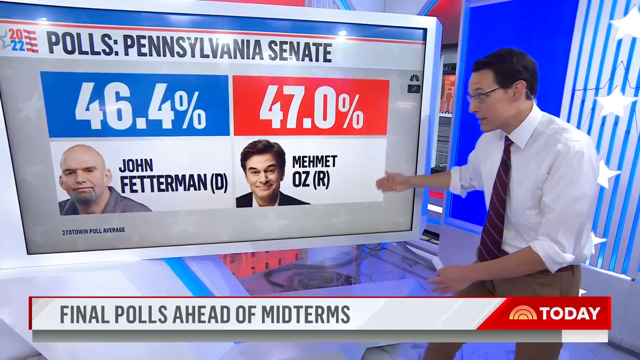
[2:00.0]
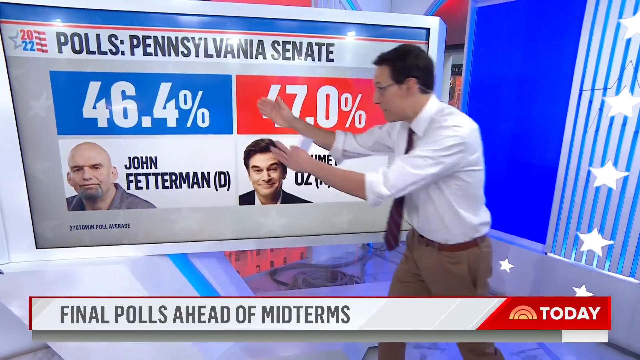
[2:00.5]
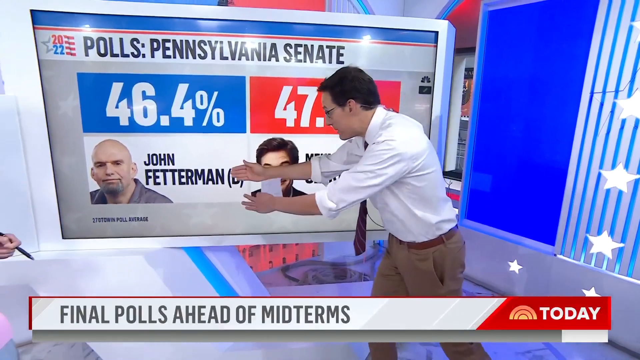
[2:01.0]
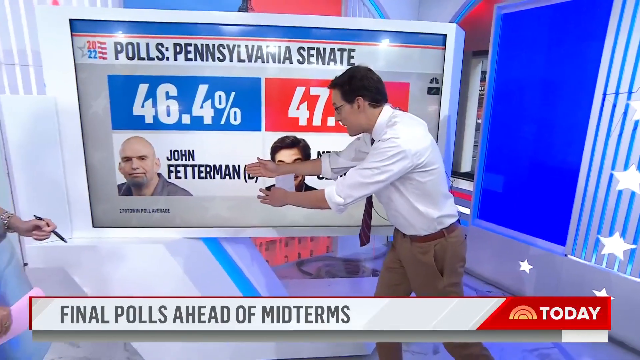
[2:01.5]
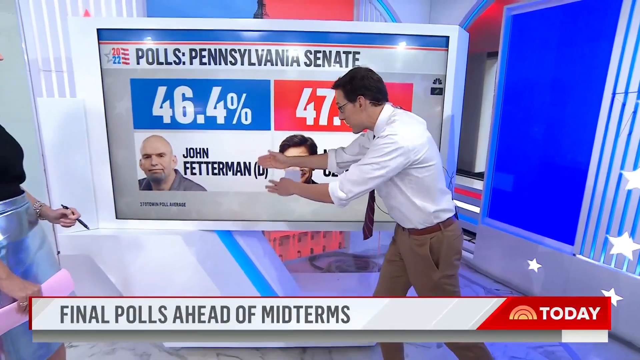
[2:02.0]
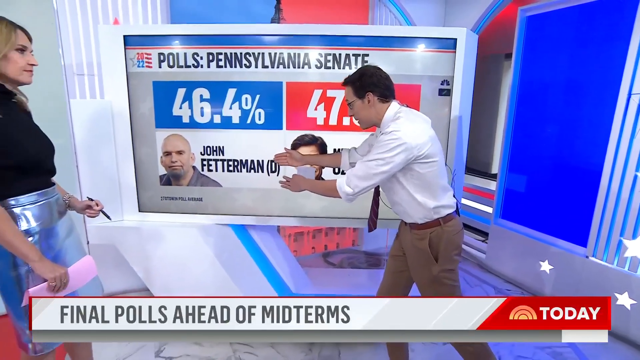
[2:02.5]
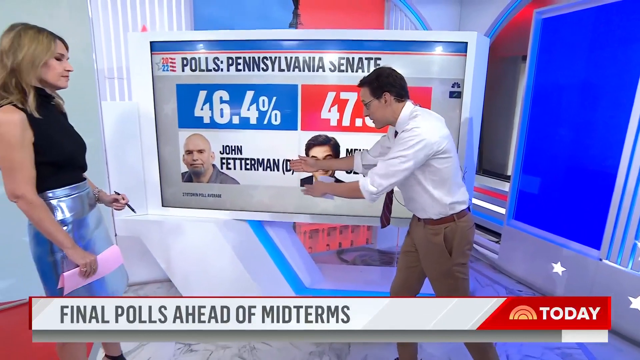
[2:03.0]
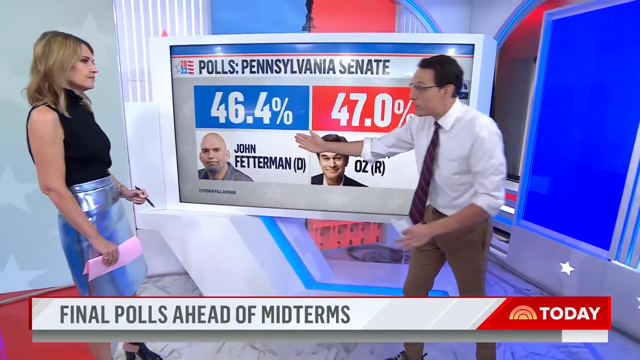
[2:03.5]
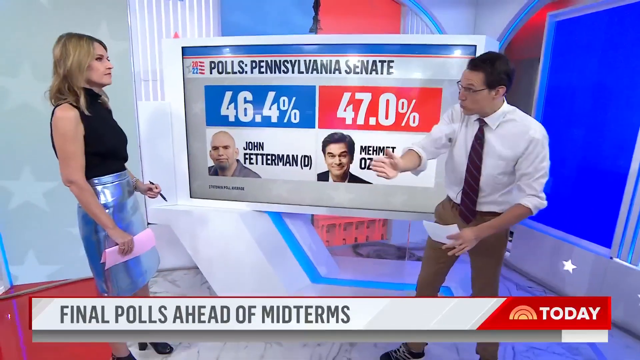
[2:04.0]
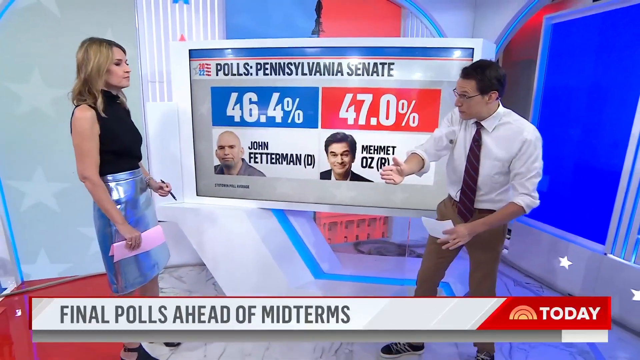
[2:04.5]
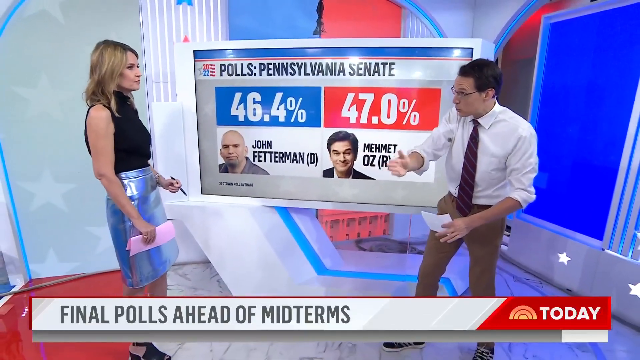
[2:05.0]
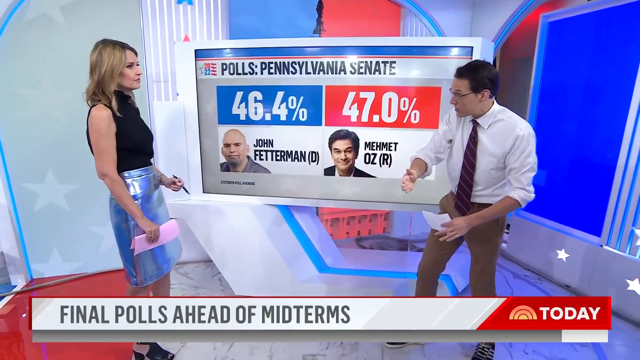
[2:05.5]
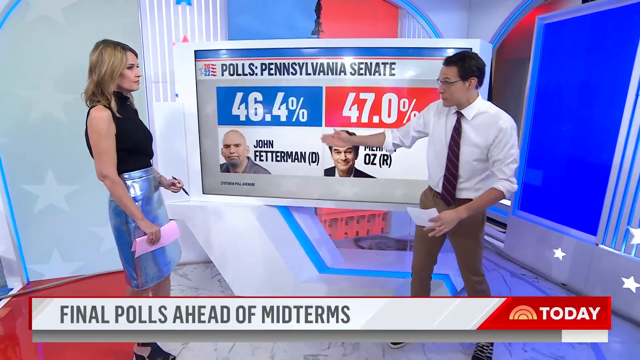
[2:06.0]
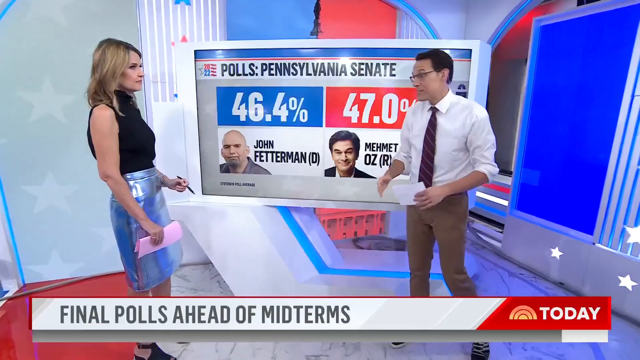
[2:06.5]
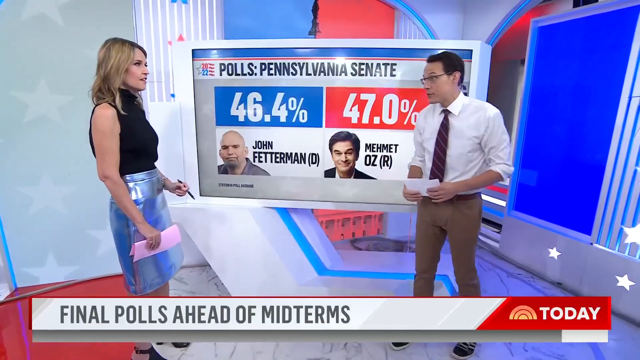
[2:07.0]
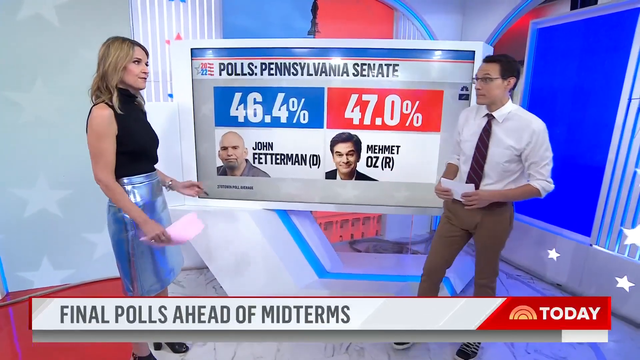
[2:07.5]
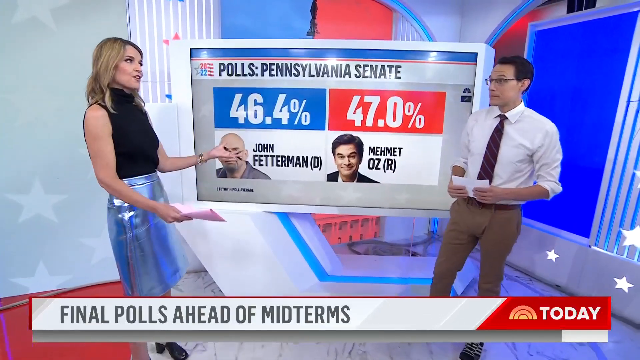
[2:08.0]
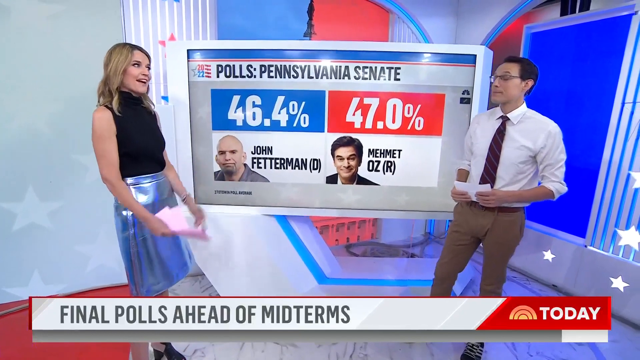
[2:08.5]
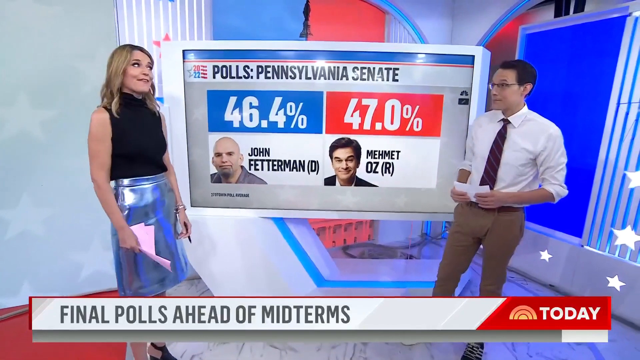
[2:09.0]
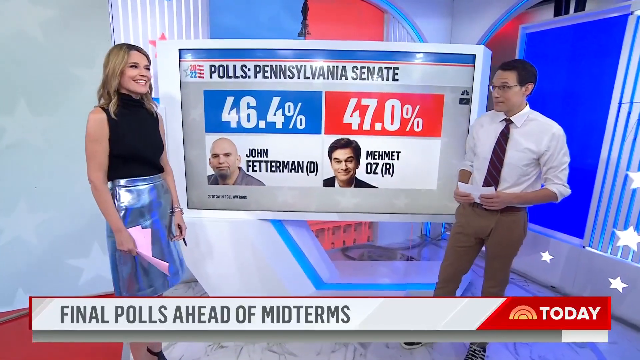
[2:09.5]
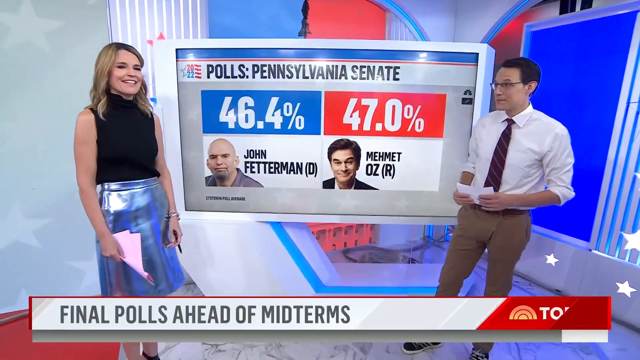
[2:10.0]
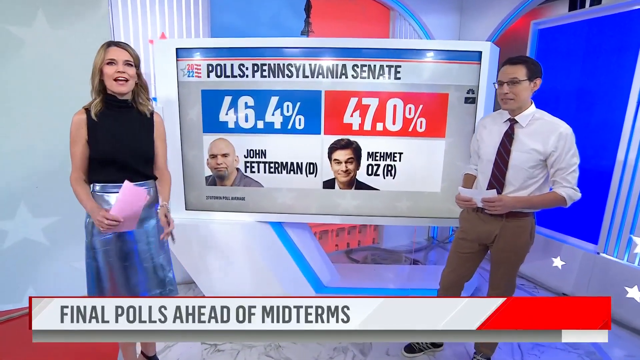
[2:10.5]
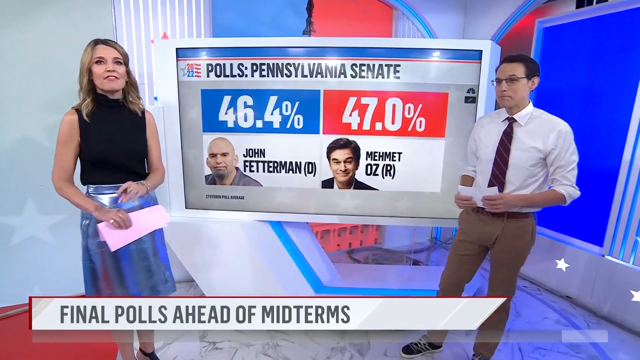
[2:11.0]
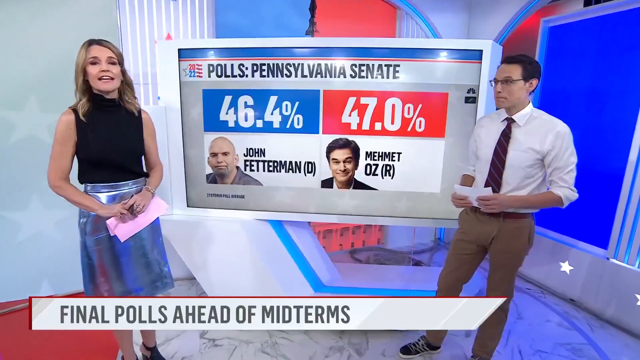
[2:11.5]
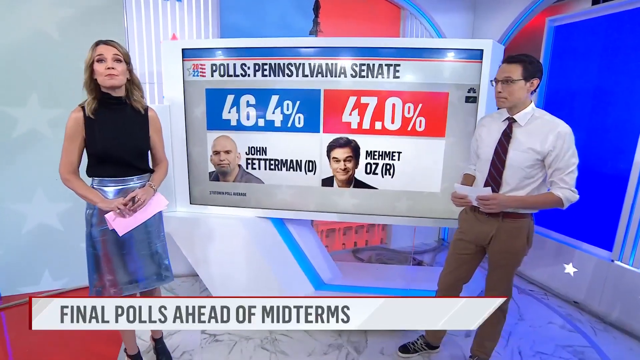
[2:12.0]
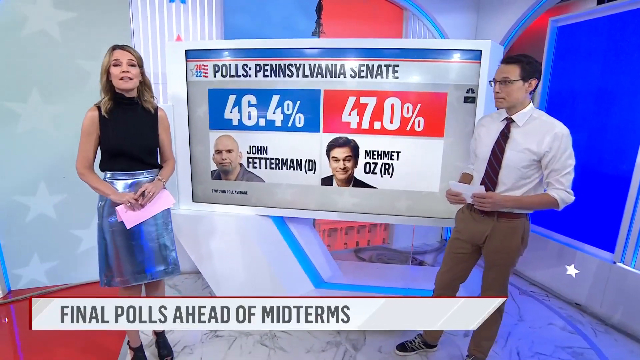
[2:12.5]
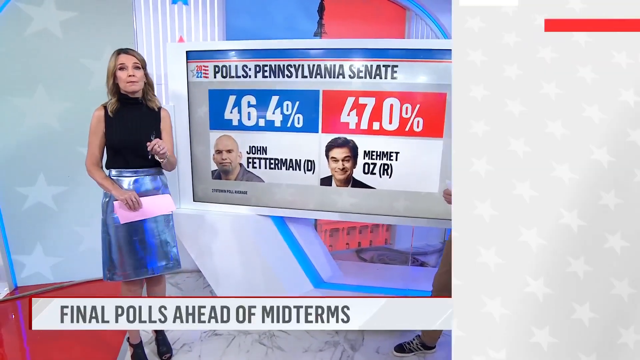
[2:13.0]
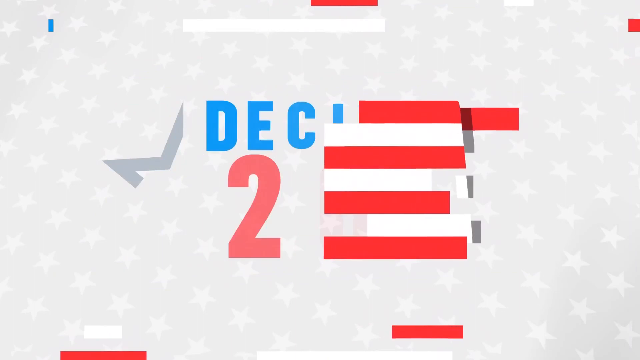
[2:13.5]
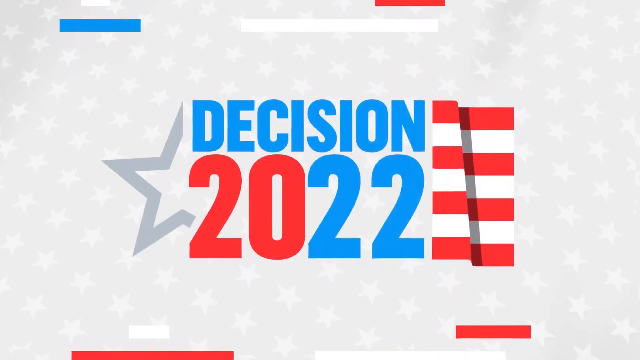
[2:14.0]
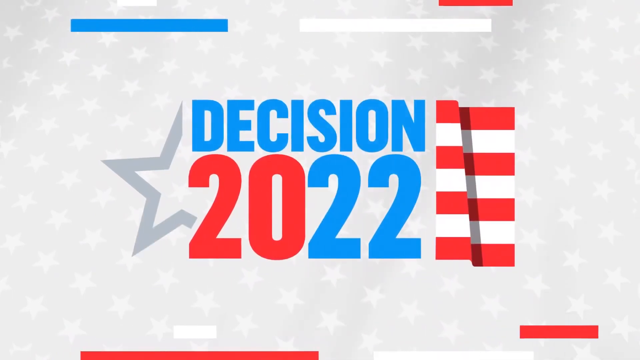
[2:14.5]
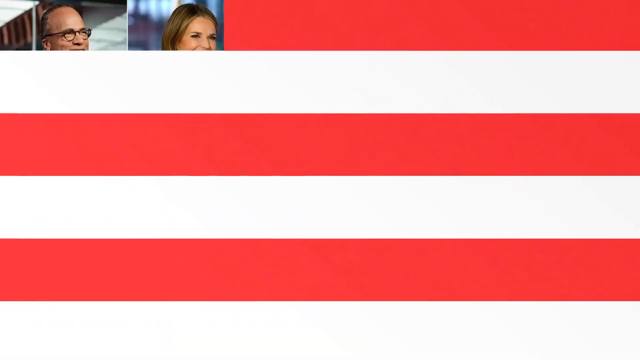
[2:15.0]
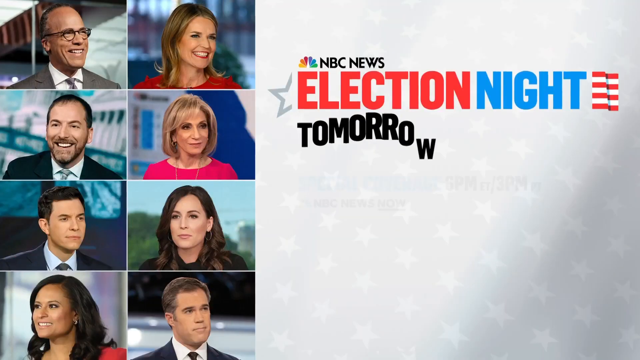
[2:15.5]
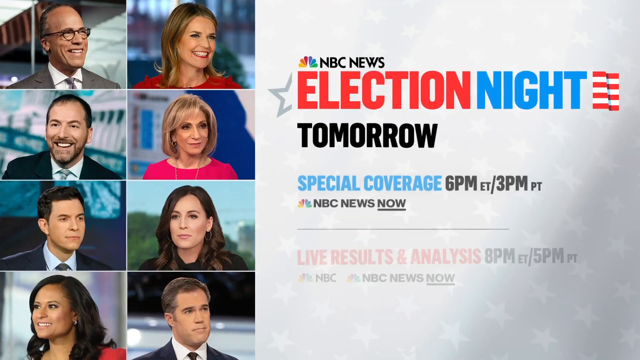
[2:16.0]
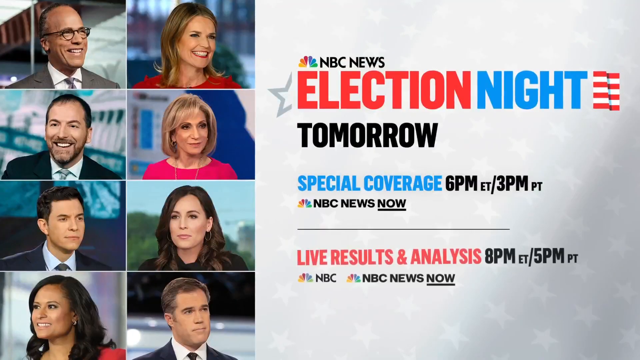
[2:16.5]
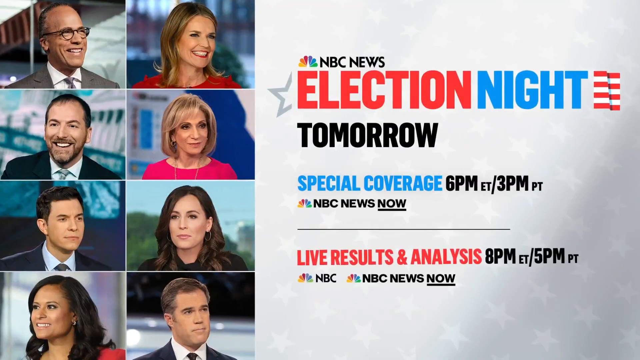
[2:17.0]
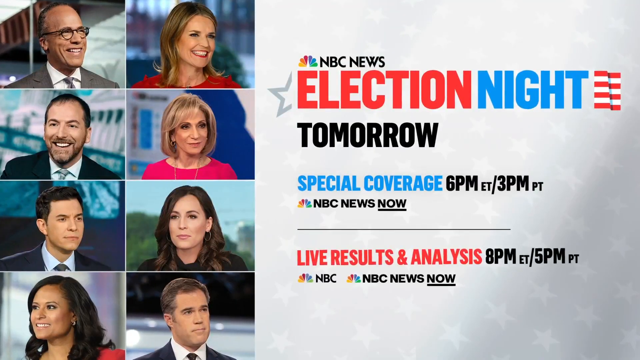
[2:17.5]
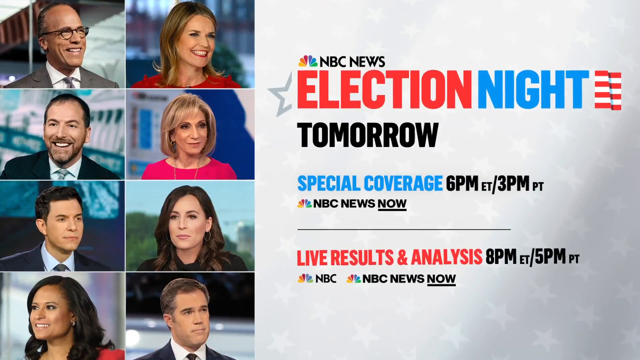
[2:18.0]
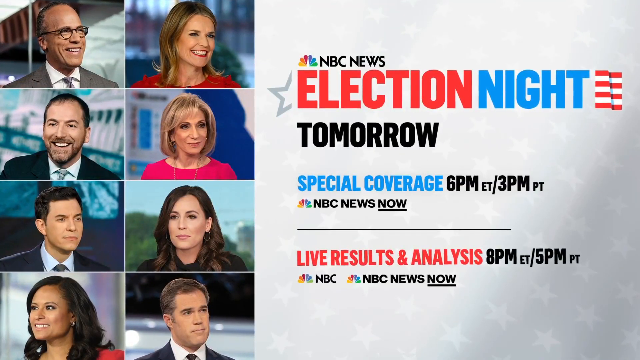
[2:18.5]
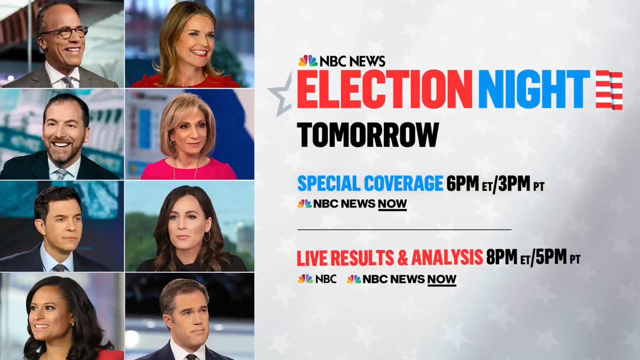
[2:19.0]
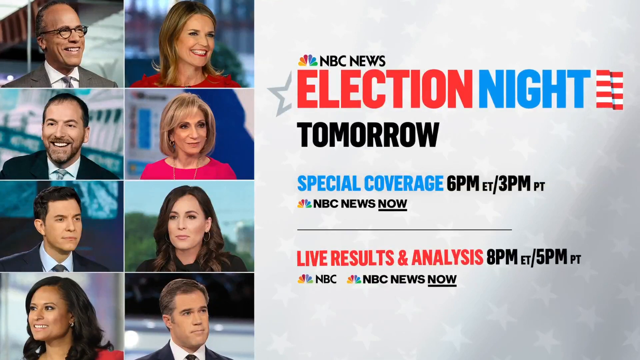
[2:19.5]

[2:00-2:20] The man is still pointing toward the Pennsylvania Senate race. The woman then talks and smiles, turning toward the camera while smiling and talking, as the man keeps looking at her. A screen follows reading "NBC News election night tomorrow," with special coverage times, "NBC News now live results," and a time of 5 p.m. for Pacific time. On the left-hand side are four pictures of different NBC news people.